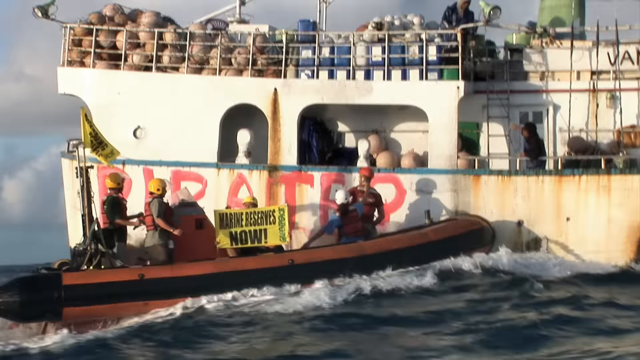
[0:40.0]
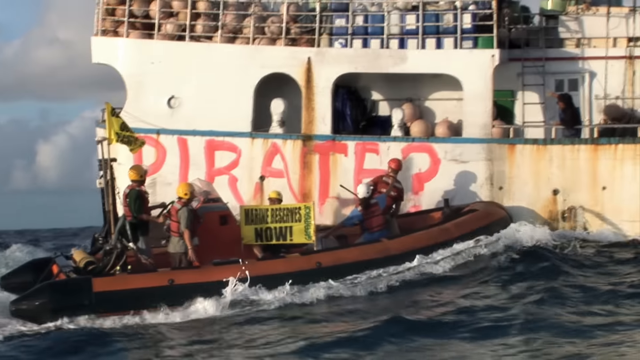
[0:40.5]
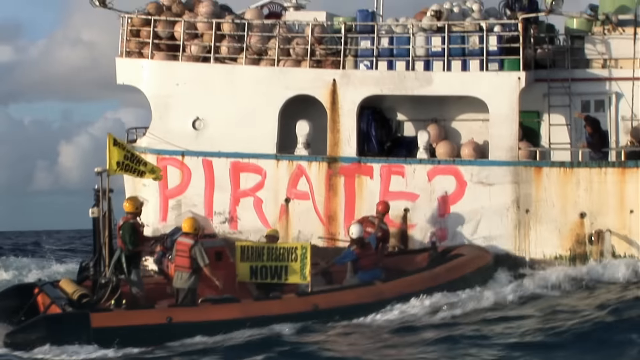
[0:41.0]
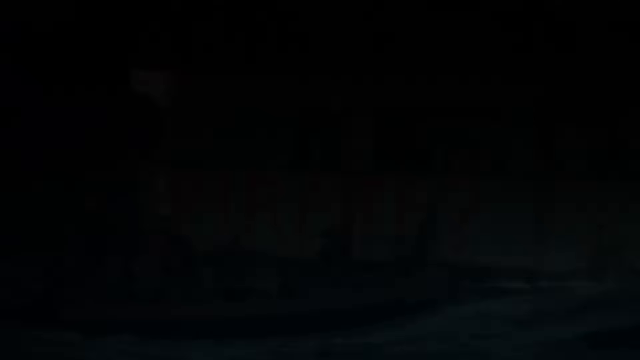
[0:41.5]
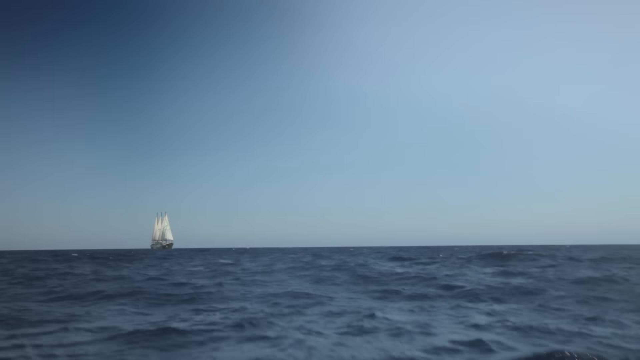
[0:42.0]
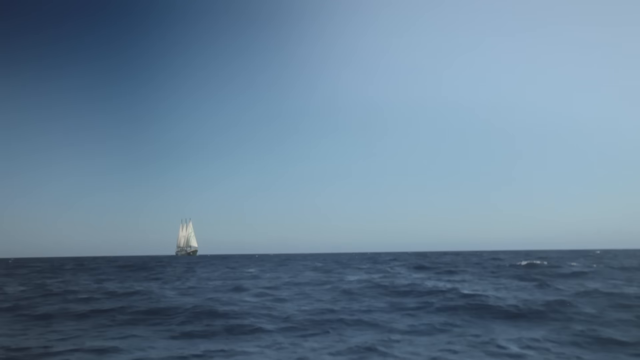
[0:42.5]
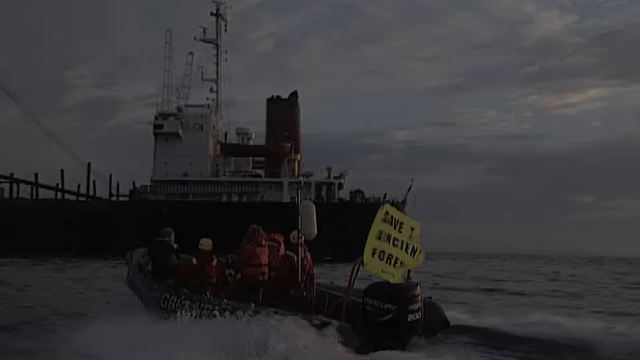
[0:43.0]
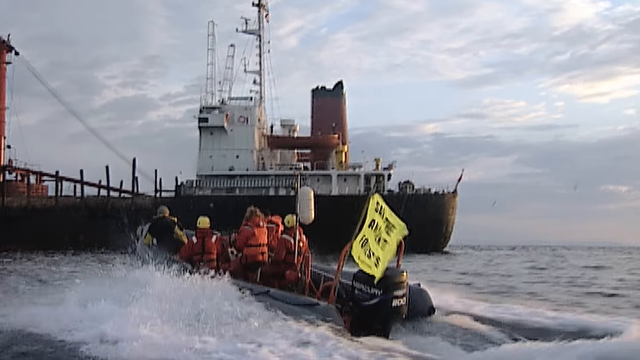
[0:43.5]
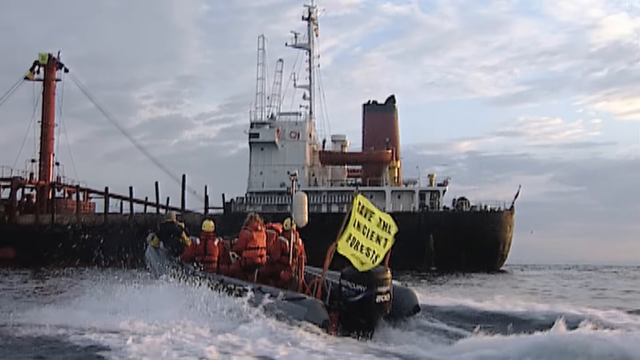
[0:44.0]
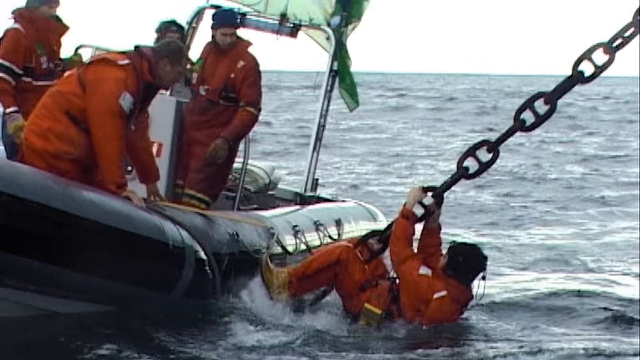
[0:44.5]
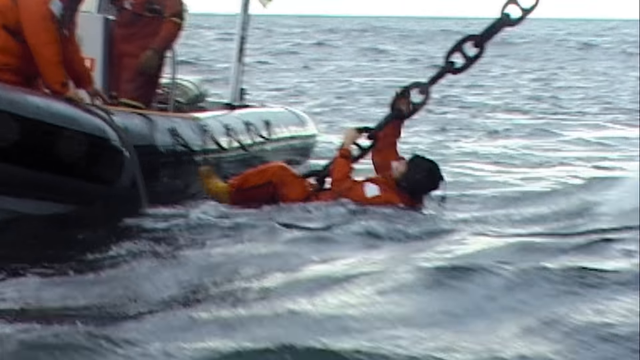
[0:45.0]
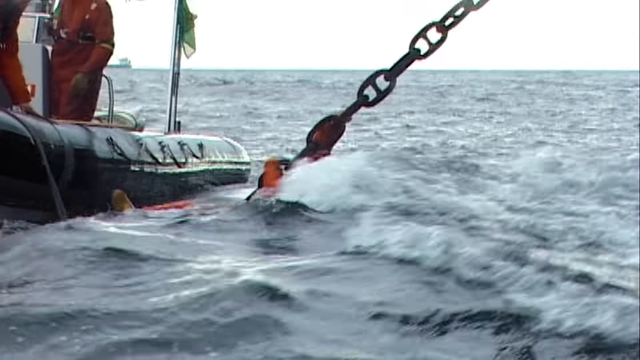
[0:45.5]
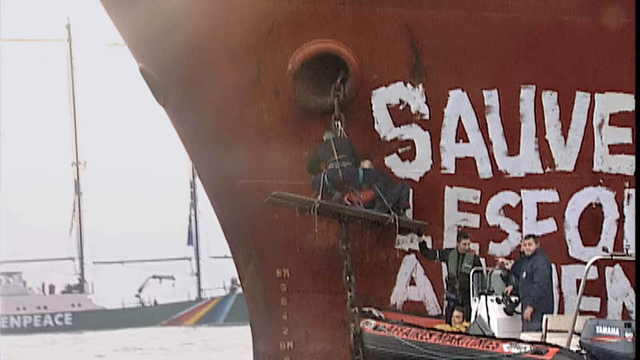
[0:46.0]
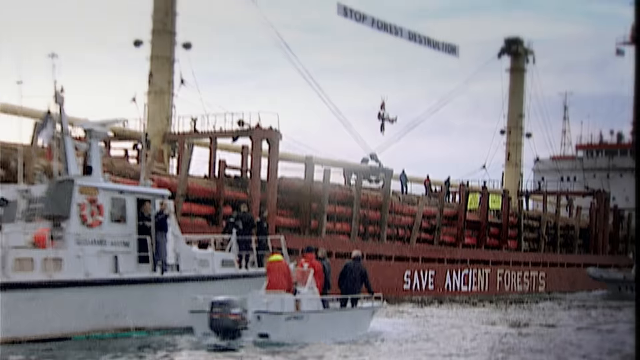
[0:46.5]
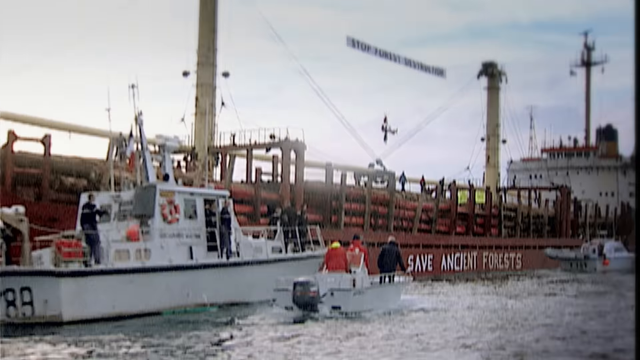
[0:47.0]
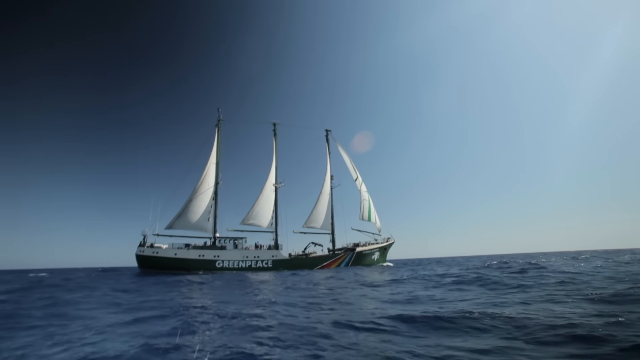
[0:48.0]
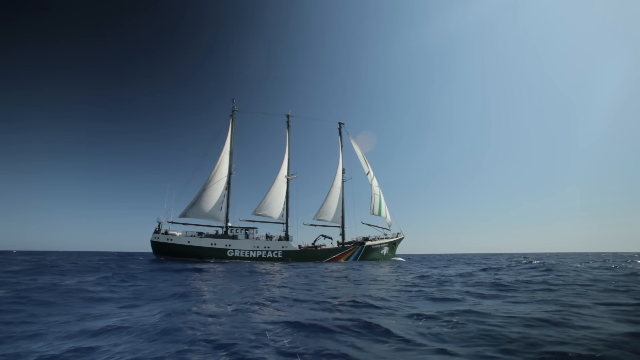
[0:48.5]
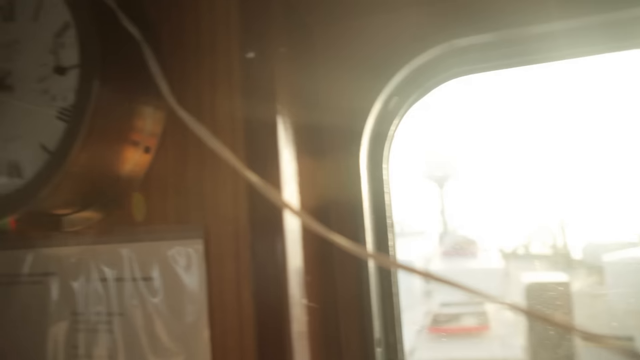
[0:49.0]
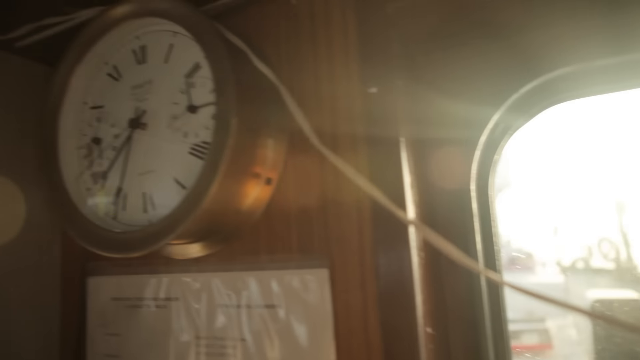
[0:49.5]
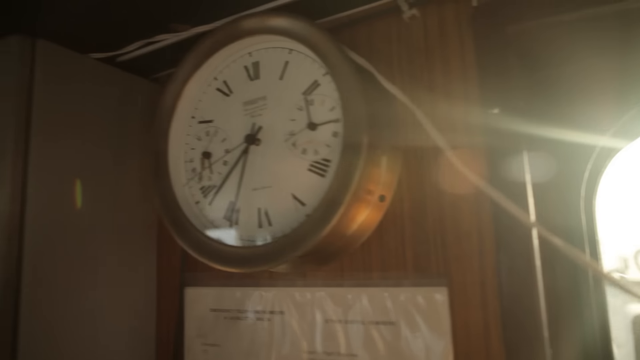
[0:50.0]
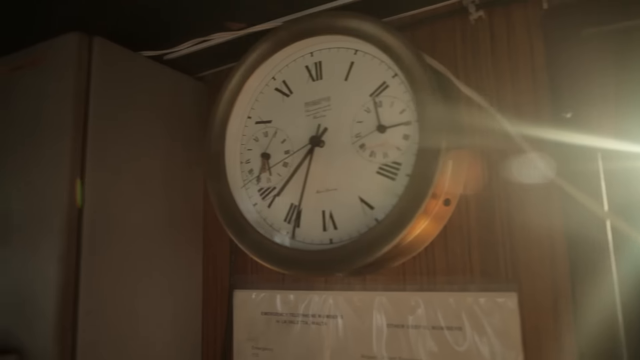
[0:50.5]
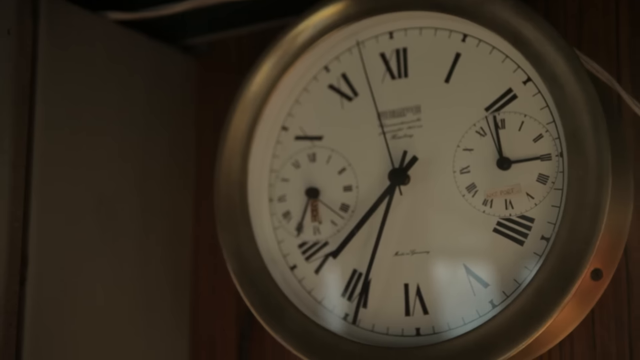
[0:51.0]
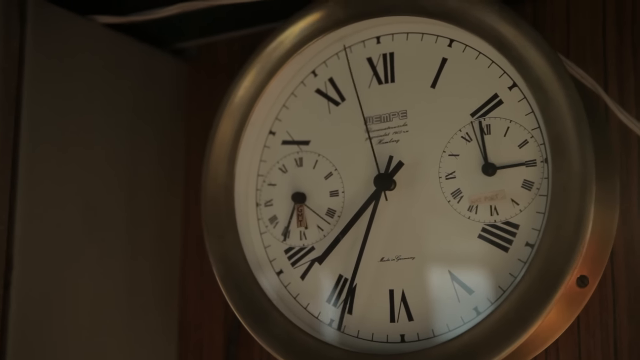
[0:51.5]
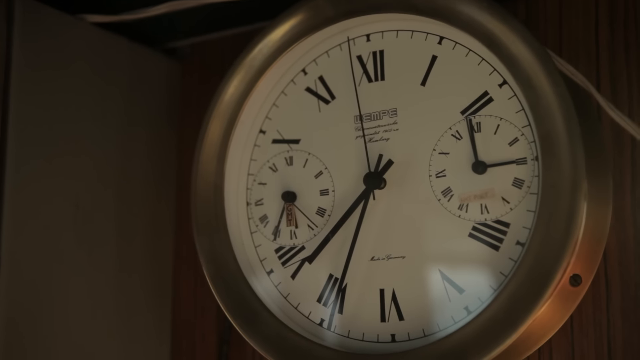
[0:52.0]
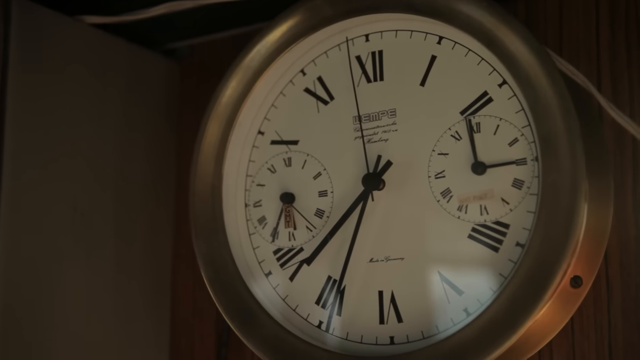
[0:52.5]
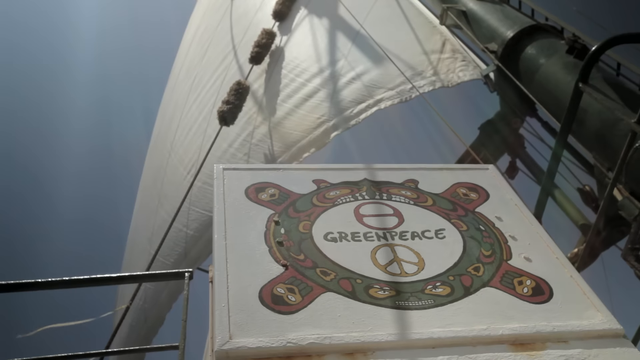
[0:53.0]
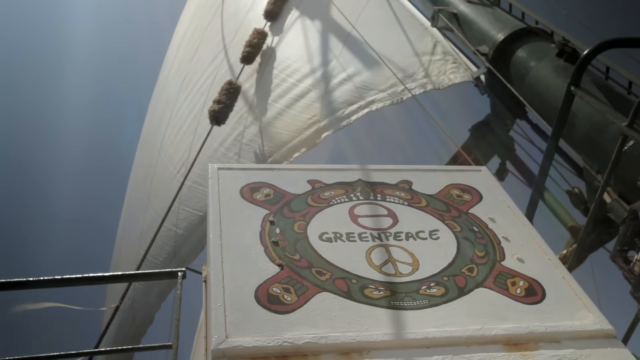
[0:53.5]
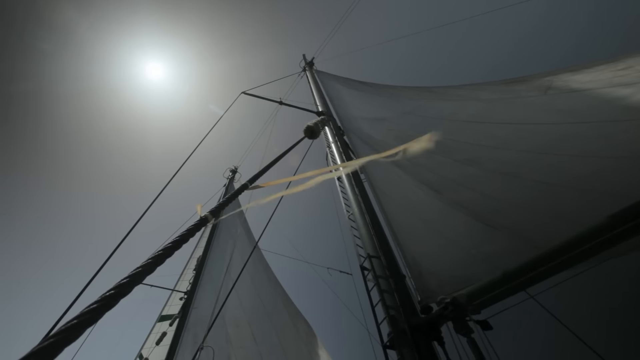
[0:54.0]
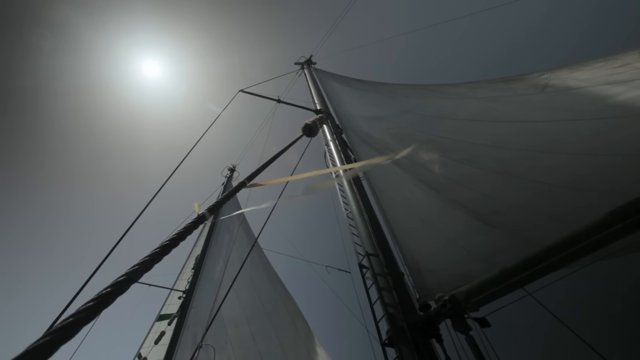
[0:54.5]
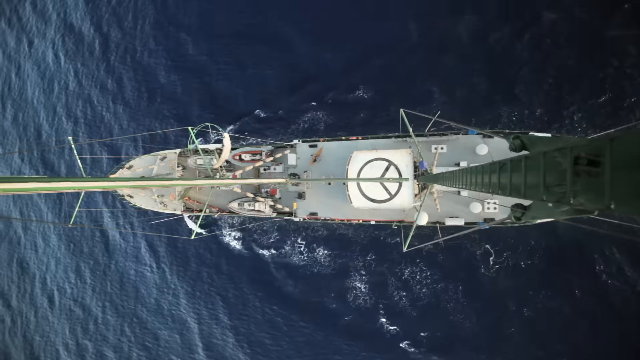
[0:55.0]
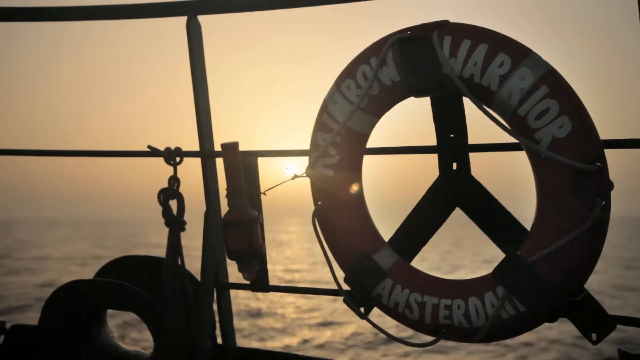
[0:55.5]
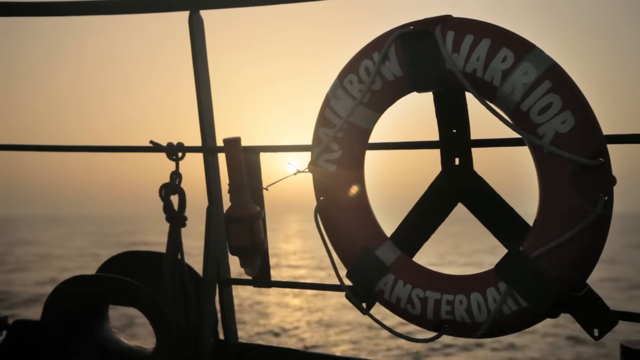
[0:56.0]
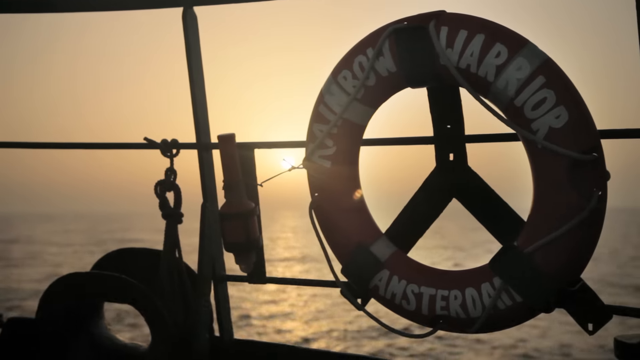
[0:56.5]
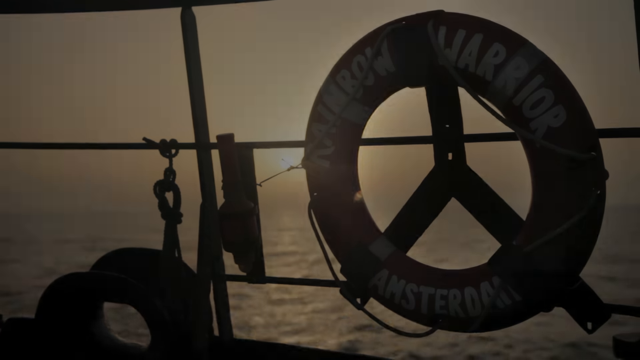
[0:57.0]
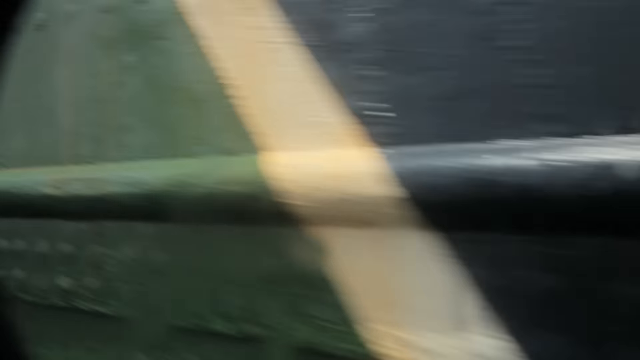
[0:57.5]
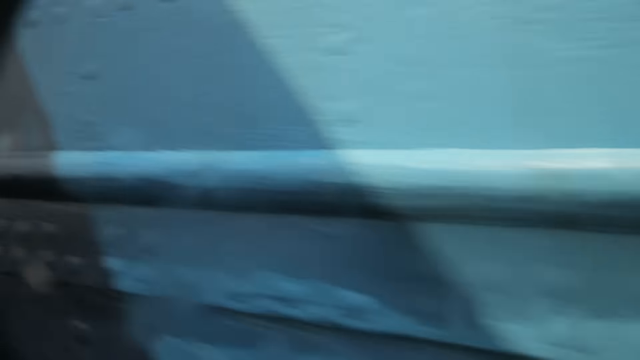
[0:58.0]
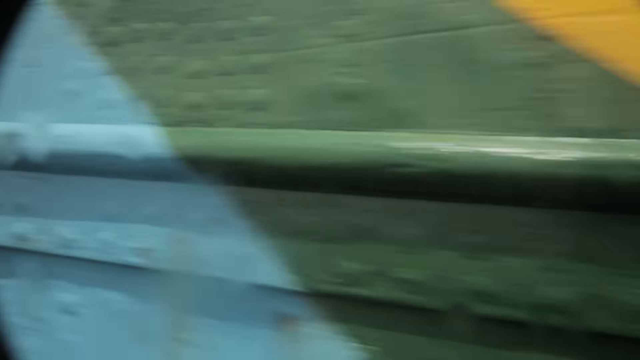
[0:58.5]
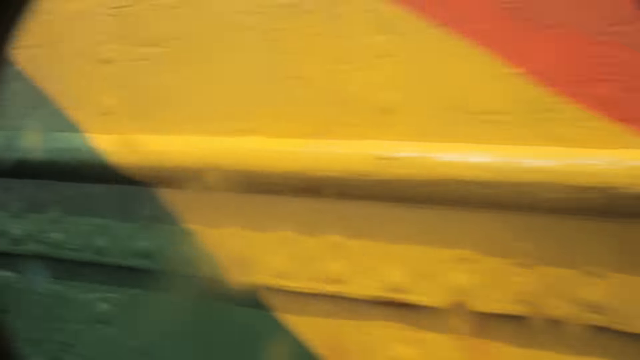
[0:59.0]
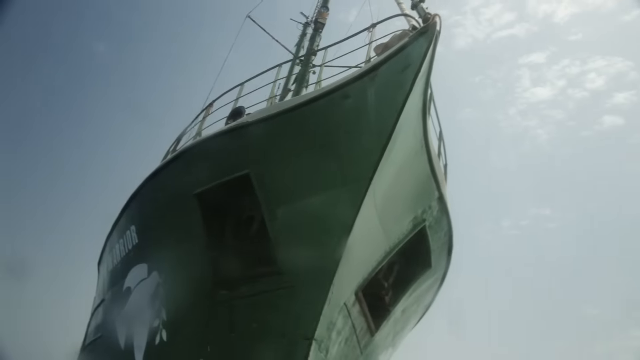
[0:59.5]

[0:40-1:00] Greenpeace members graffiti another fishing vessel with "pirate?" and then attempt to gain access to larger industrial boats. One side of a boat is graffitied with "save ancient forests." The members float around in a big sailing ship, and their boat is shown with a giant peace sign and "Rainbow Warrior" on it. They appear to be trying to board some of the ships via the anchor, or at least get onto the outside to graffiti them. Graffiti in a different language is on the side of a giant red boat by the anchor, and what looks like makeshift scaffolding has been built on the anchor so they can climb it. Their boat looks about 50 to 60 feet long, green, with four sails and a giant peace sign painted on the back.